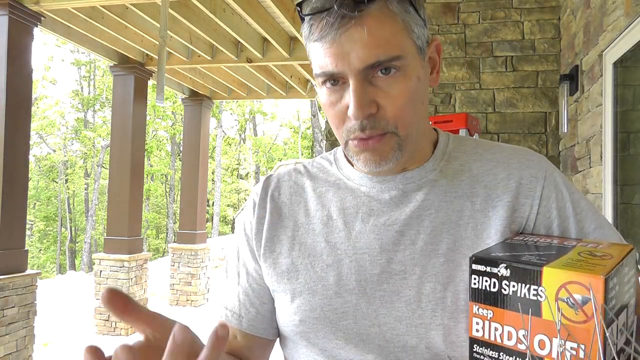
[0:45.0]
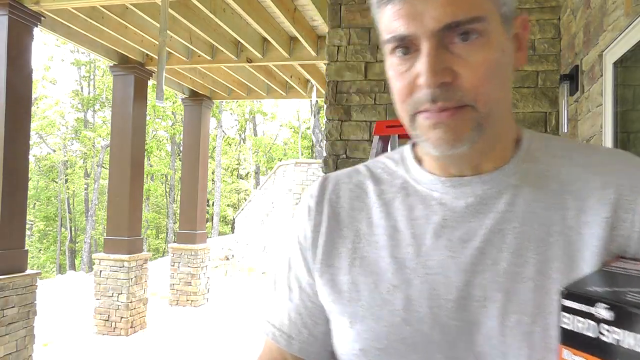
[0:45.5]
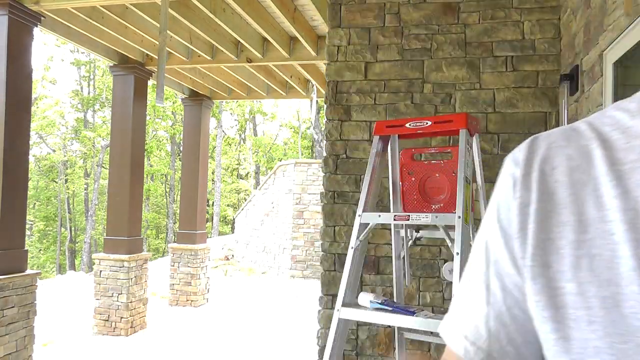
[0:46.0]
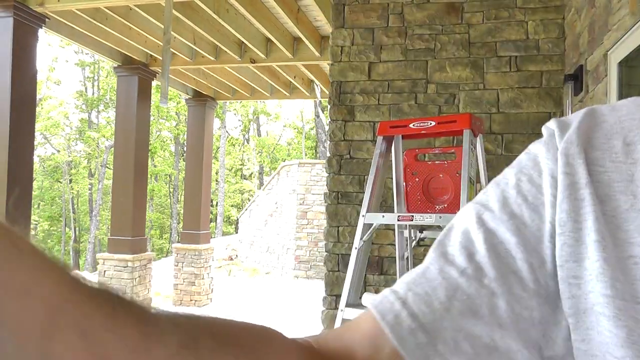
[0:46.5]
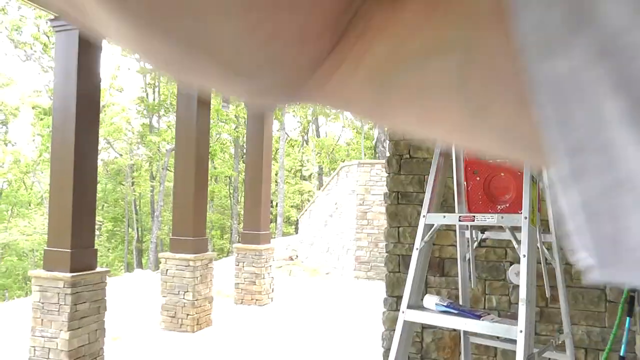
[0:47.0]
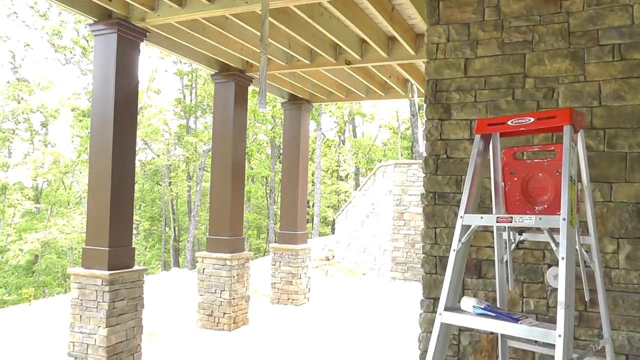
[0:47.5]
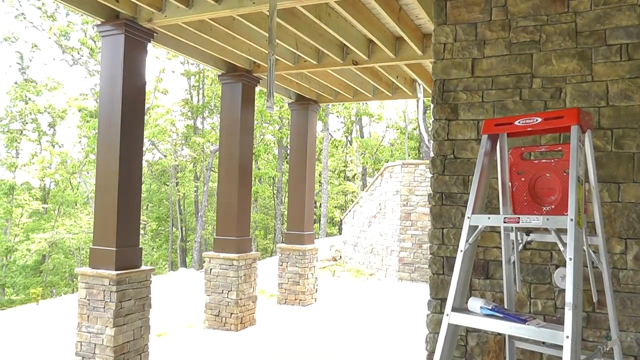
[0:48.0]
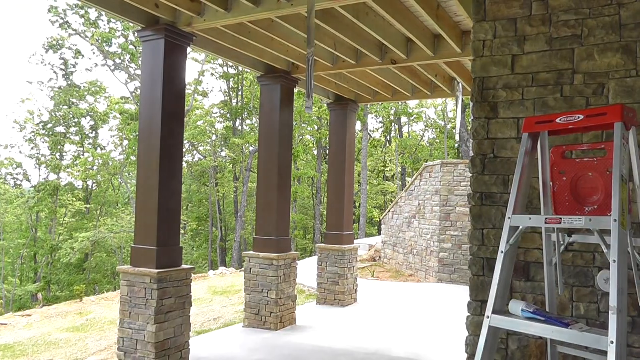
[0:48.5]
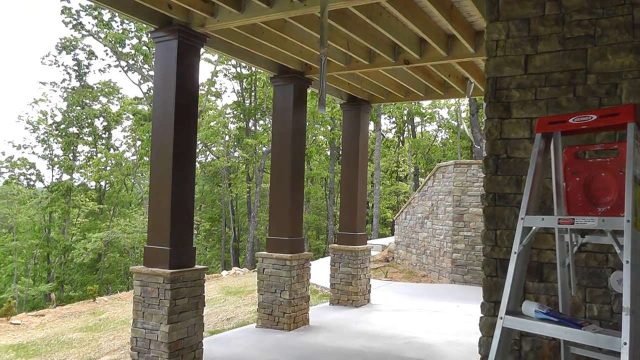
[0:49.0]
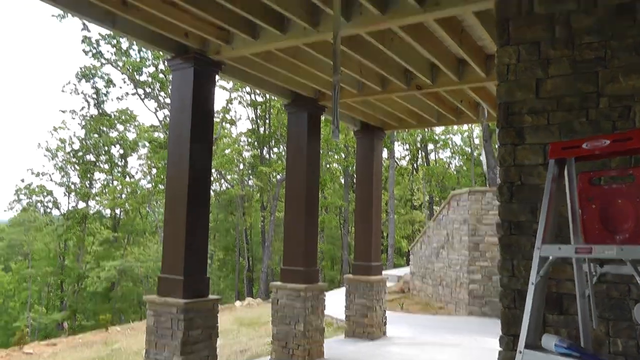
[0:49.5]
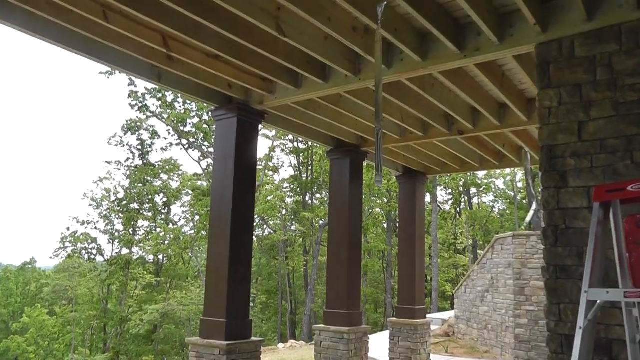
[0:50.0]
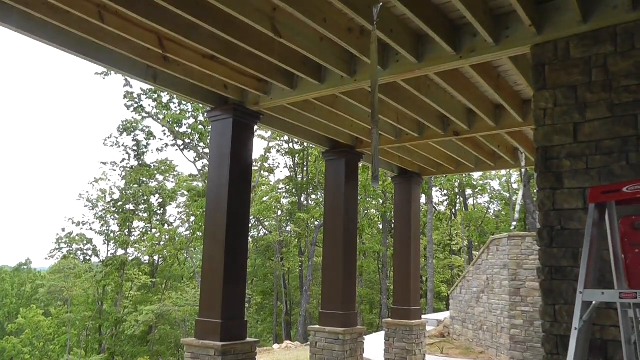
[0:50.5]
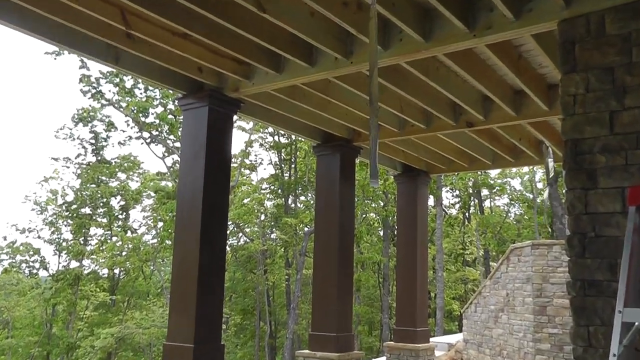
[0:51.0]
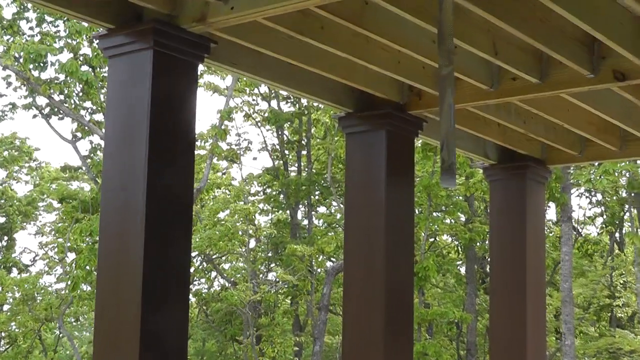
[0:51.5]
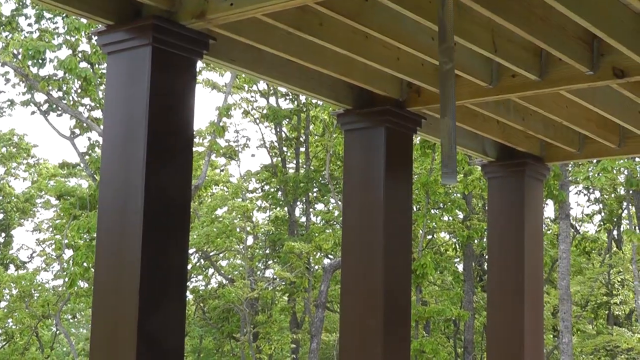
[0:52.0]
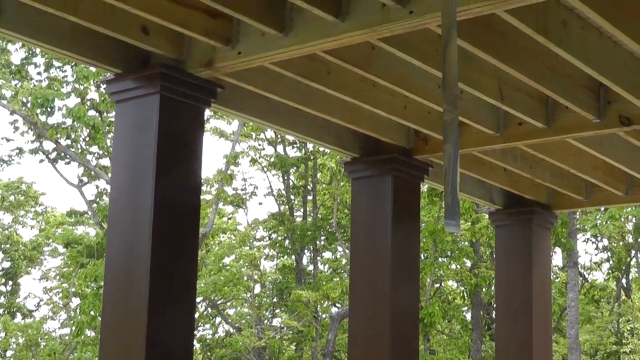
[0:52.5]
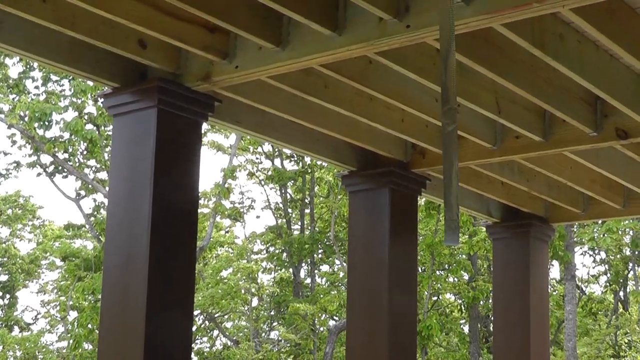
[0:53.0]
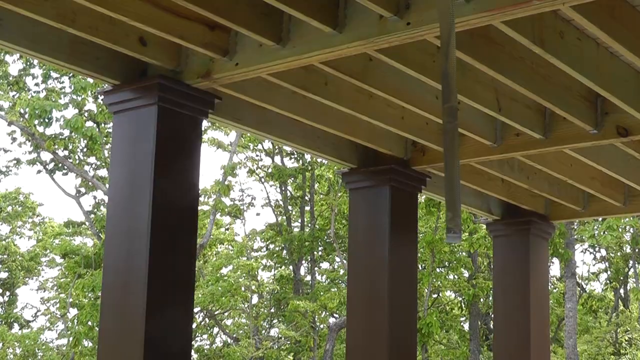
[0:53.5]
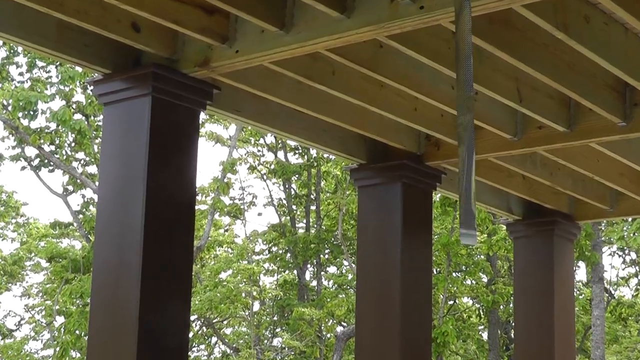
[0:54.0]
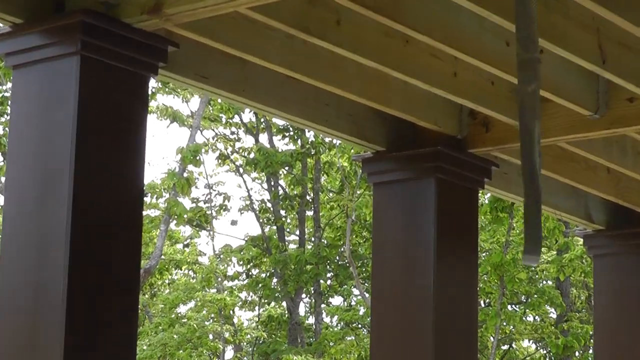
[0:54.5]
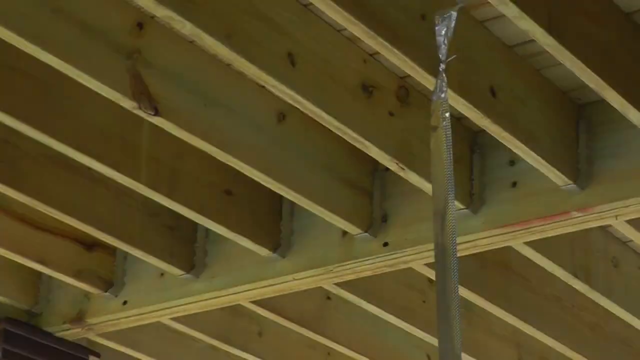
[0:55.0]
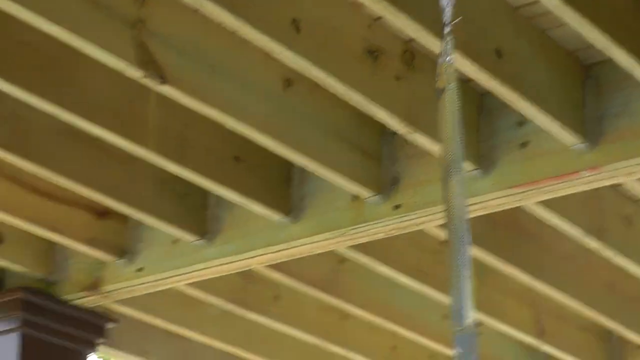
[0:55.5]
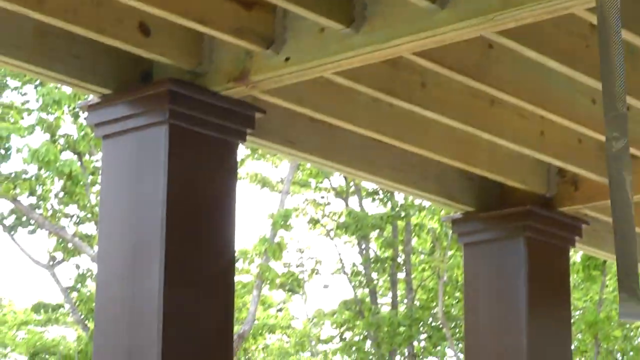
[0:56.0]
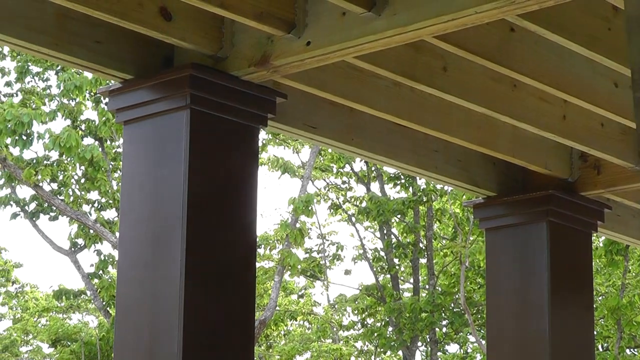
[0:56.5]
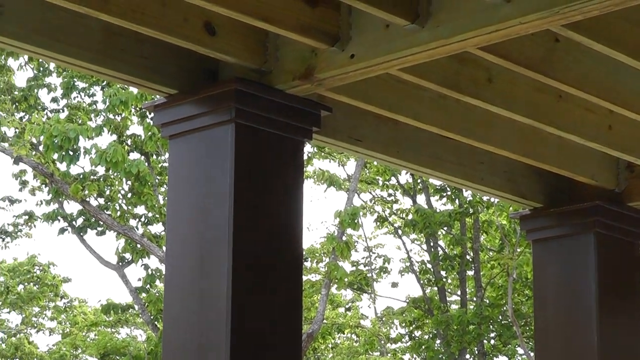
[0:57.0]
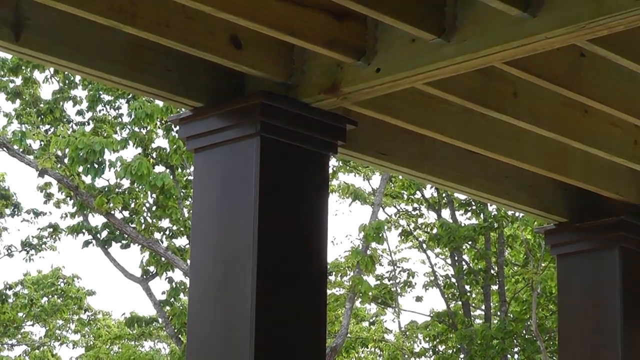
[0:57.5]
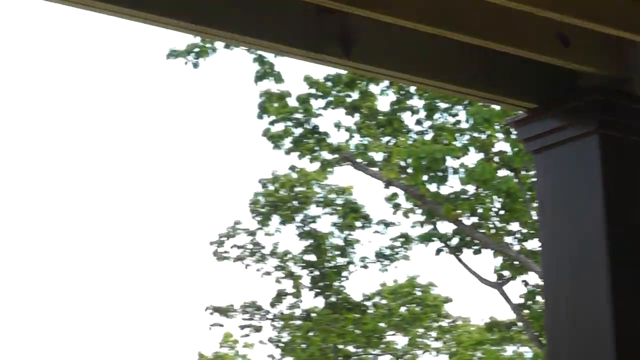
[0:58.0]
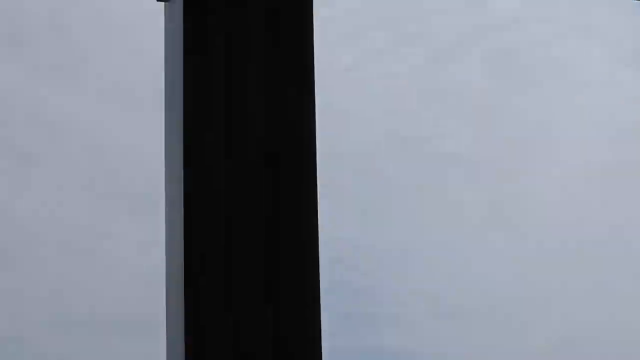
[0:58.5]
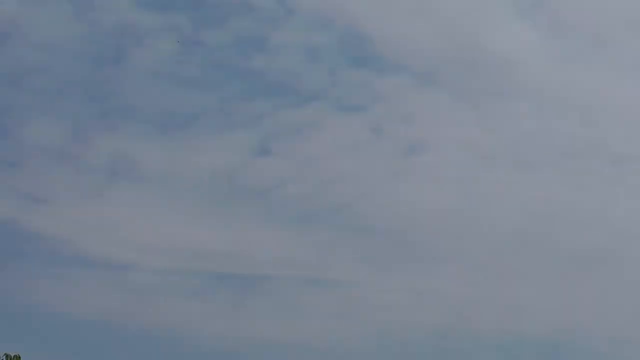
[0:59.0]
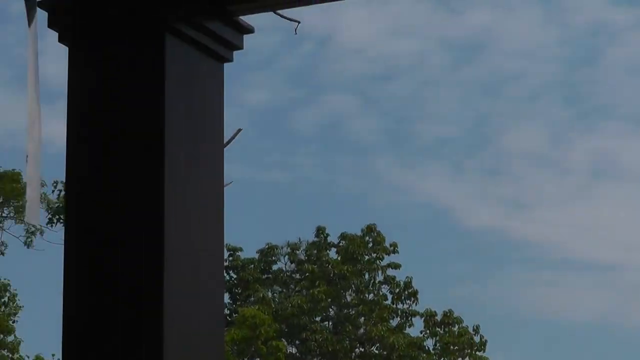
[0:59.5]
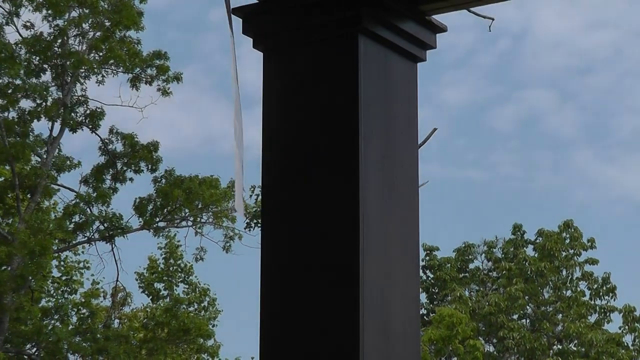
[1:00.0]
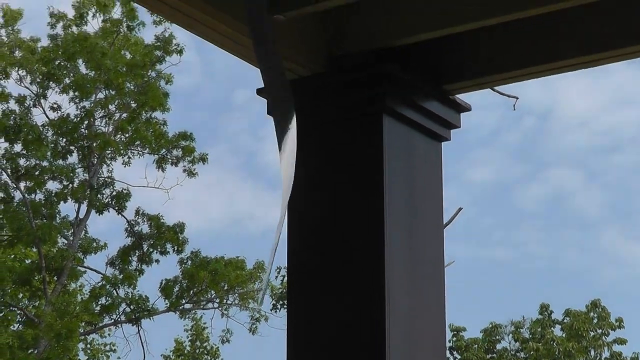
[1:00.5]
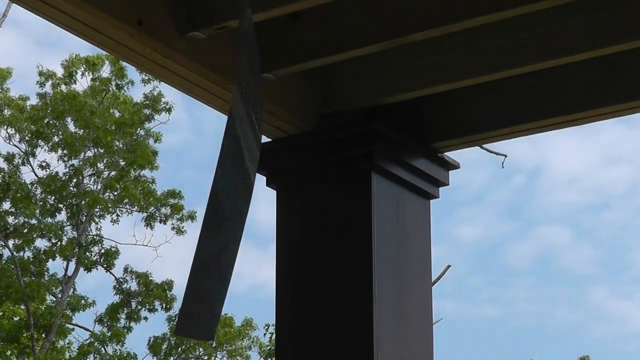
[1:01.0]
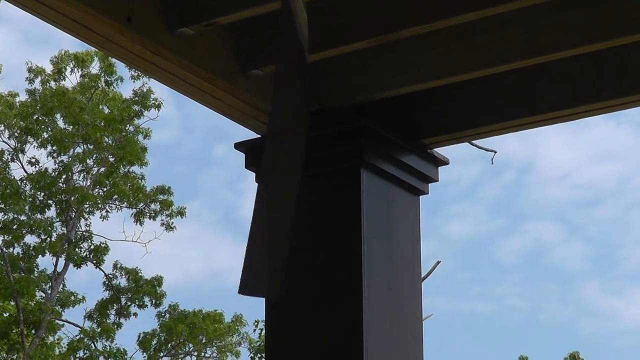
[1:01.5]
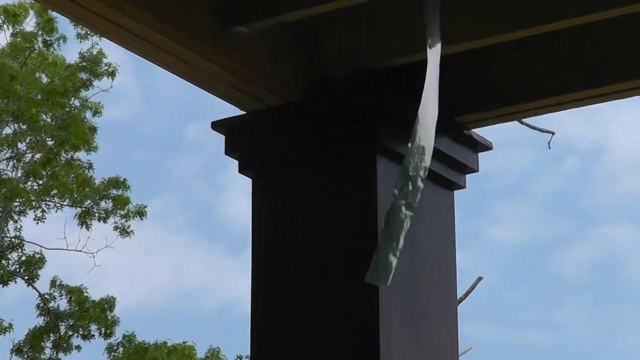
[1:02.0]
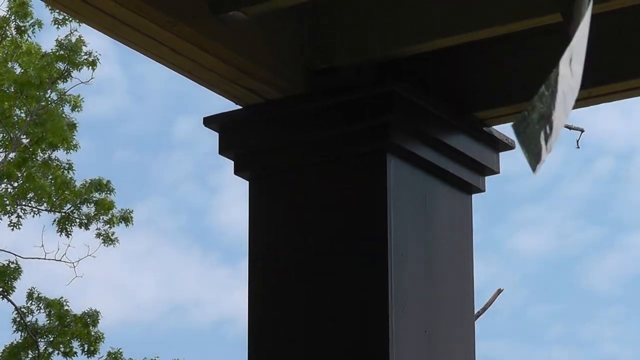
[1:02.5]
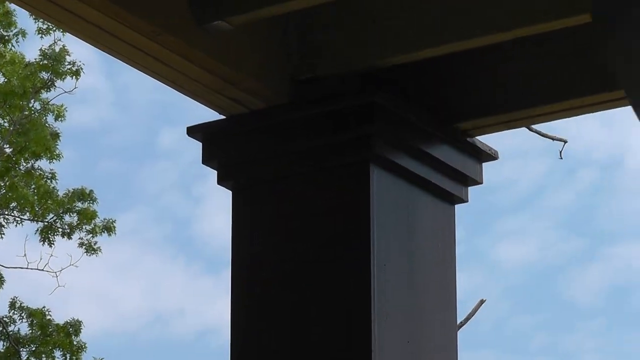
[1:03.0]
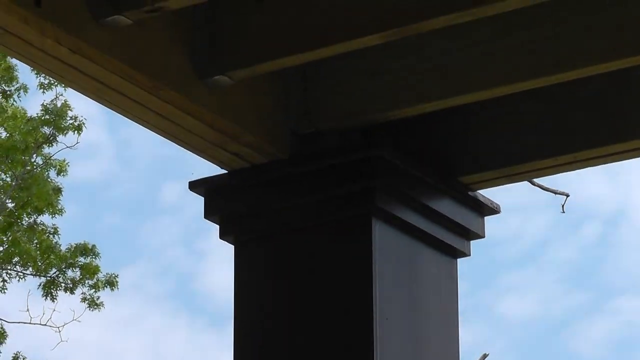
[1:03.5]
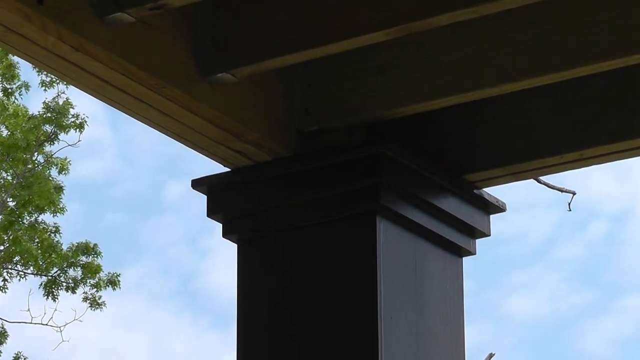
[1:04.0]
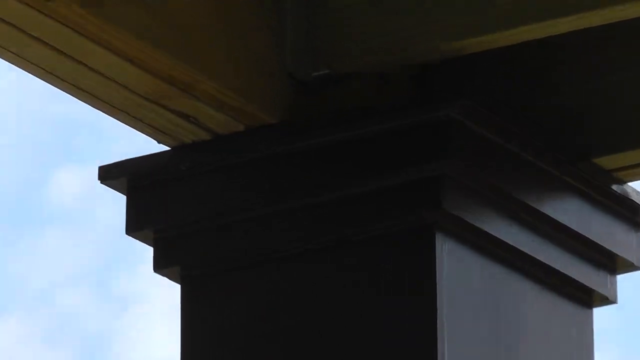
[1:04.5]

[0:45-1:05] The man, in his mid to late 40s, is showing off a product. He zooms the camera around his porch, highlighting some metal strips or mylar strips taped to the underside of the porch, which gently flap in the wind as he zooms in and out on them. The house is perched on a hill overlooking the woods, and the sky in the background is blue and partly cloudy. In some shots the aluminum ladder is visible in the background as he pans the camera.